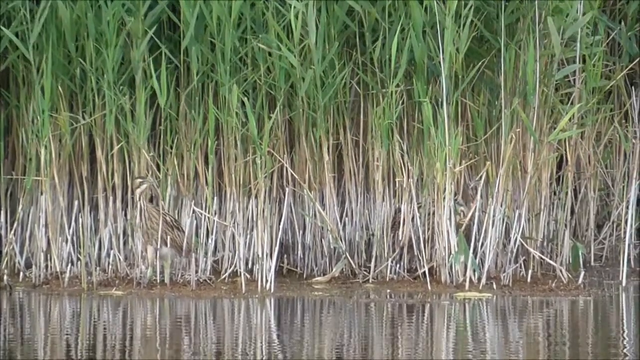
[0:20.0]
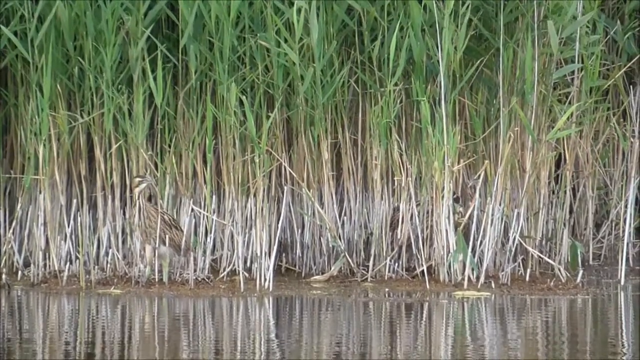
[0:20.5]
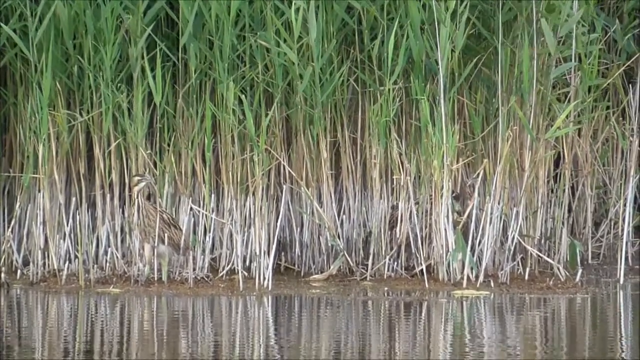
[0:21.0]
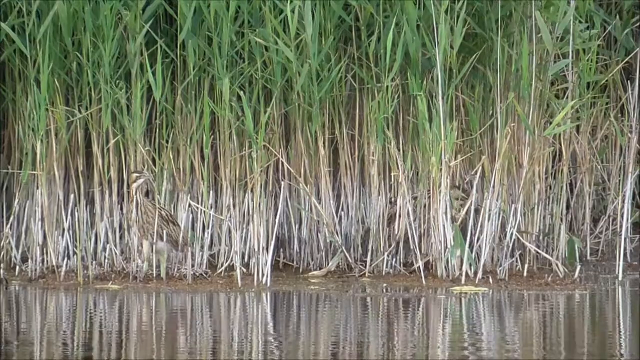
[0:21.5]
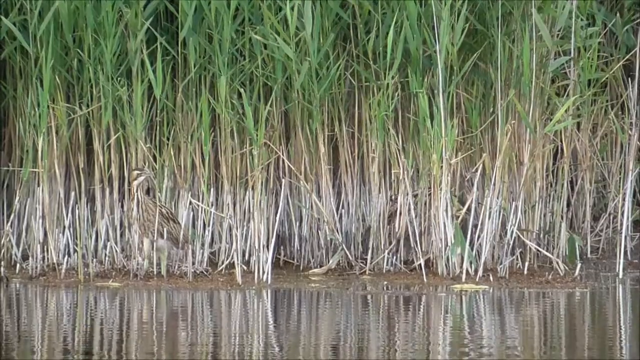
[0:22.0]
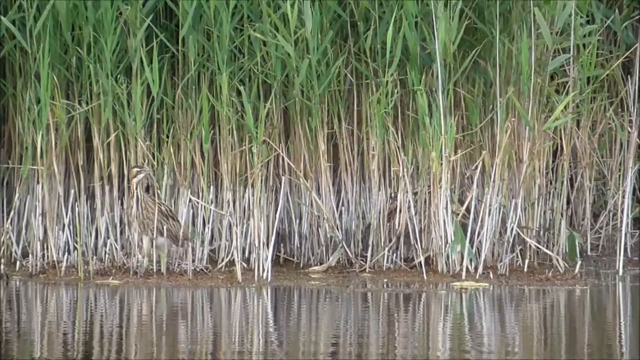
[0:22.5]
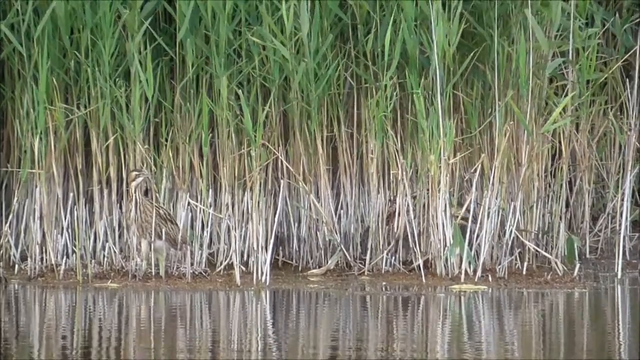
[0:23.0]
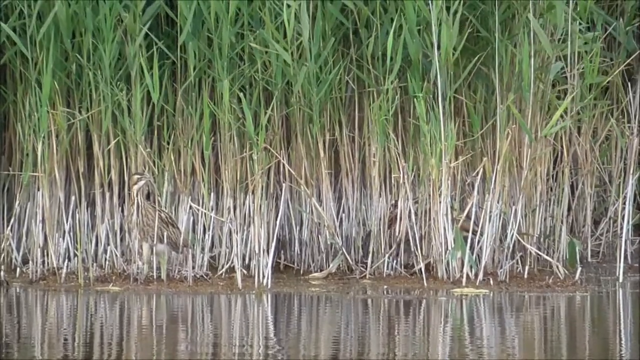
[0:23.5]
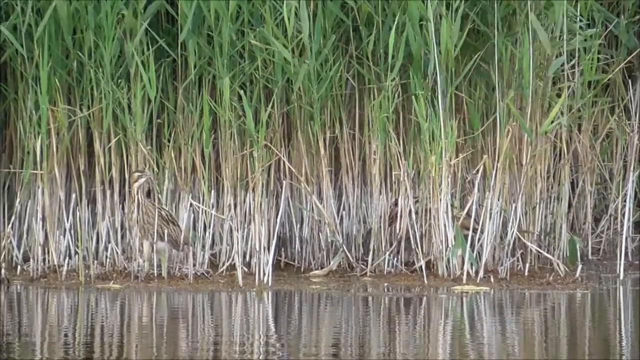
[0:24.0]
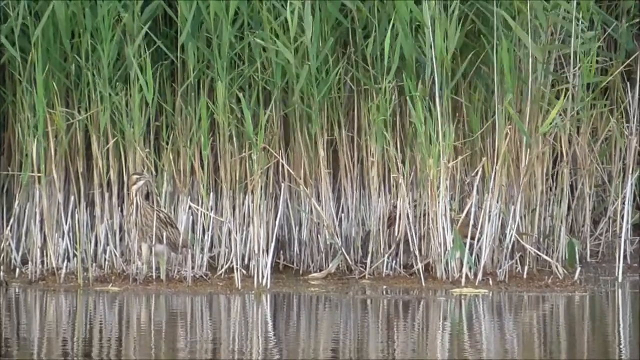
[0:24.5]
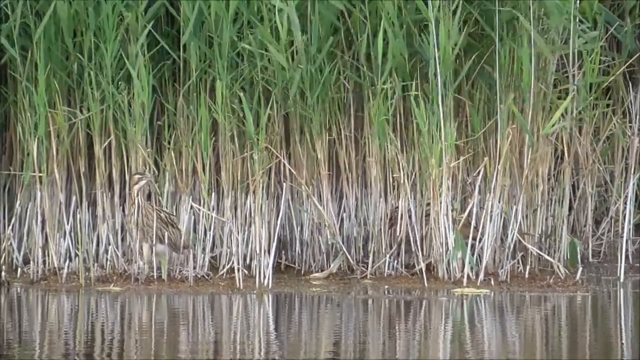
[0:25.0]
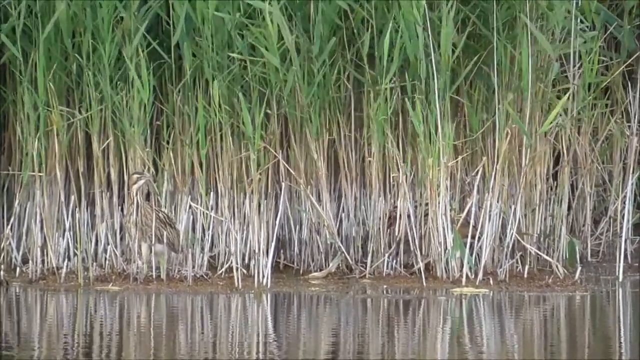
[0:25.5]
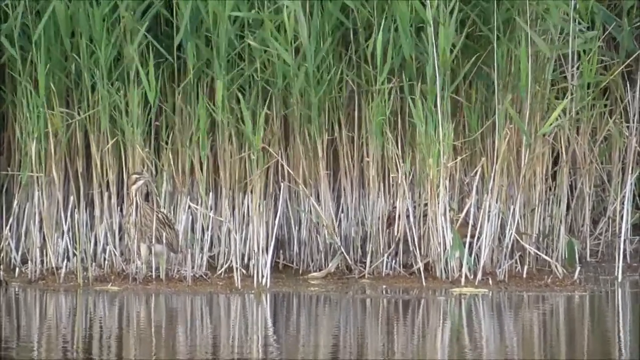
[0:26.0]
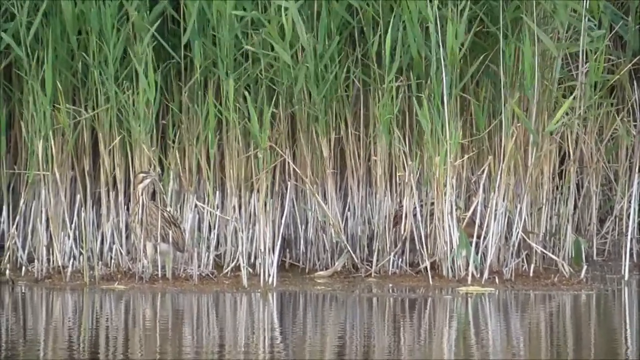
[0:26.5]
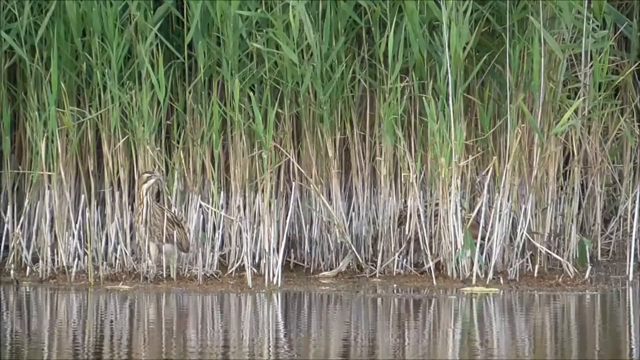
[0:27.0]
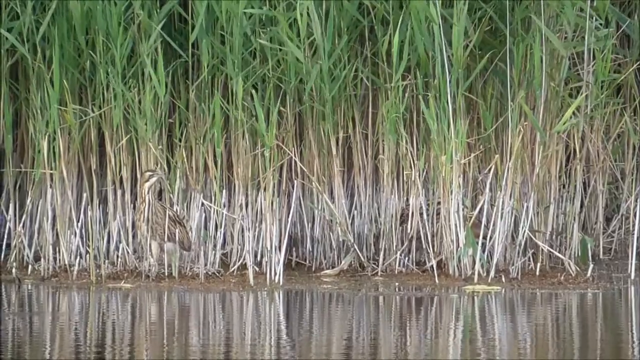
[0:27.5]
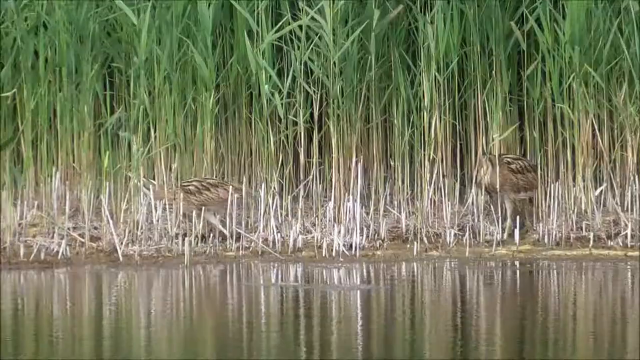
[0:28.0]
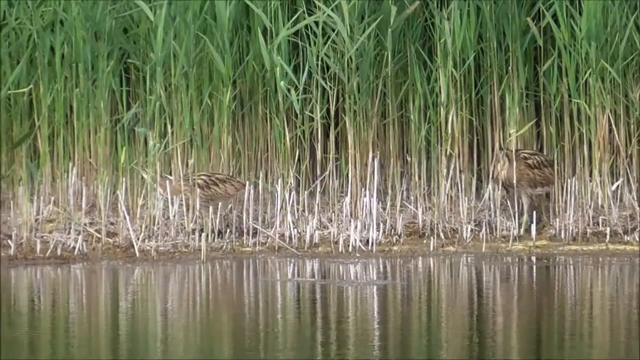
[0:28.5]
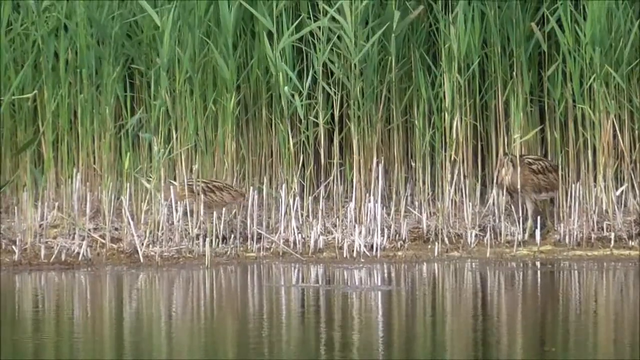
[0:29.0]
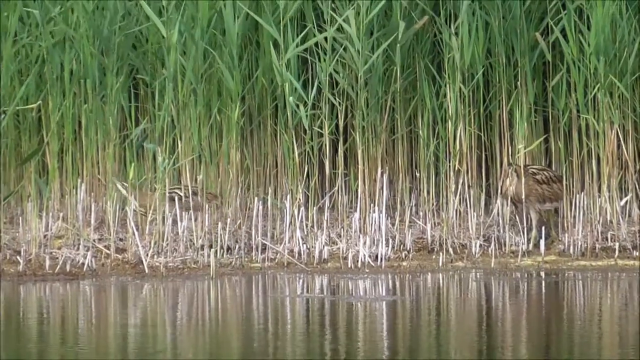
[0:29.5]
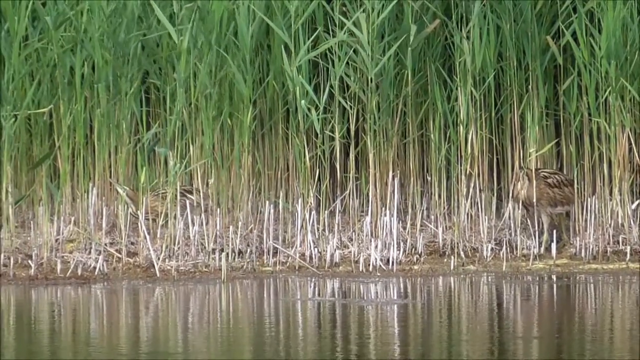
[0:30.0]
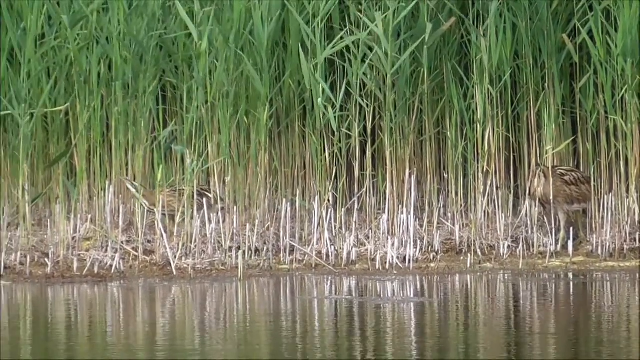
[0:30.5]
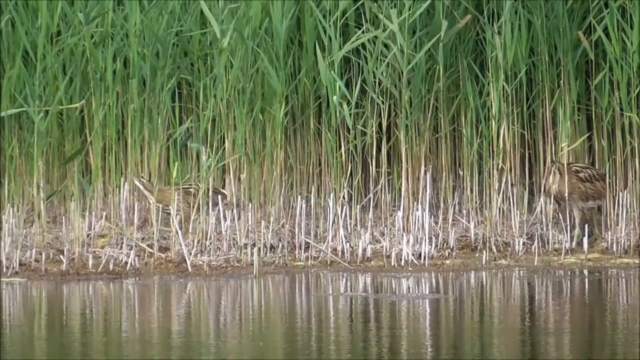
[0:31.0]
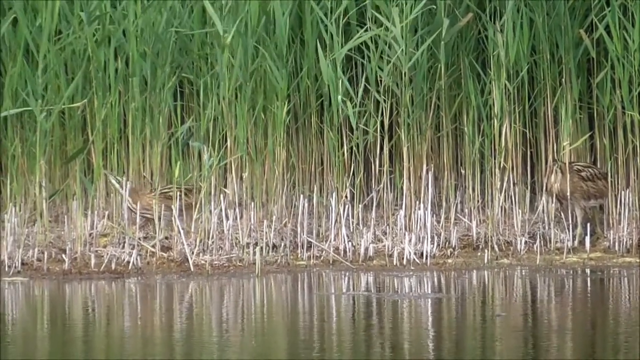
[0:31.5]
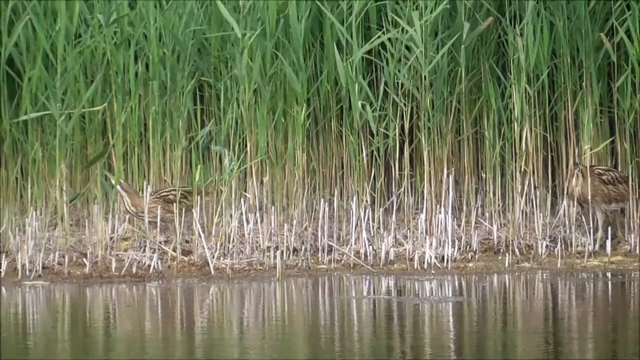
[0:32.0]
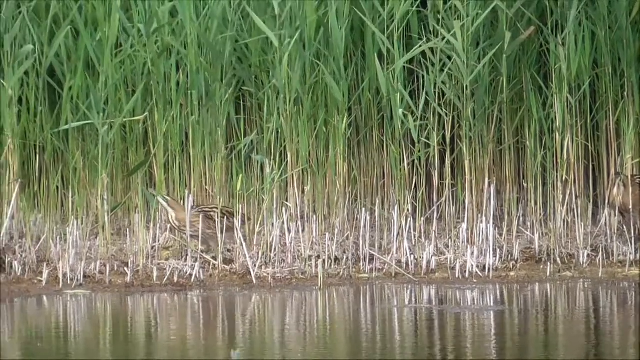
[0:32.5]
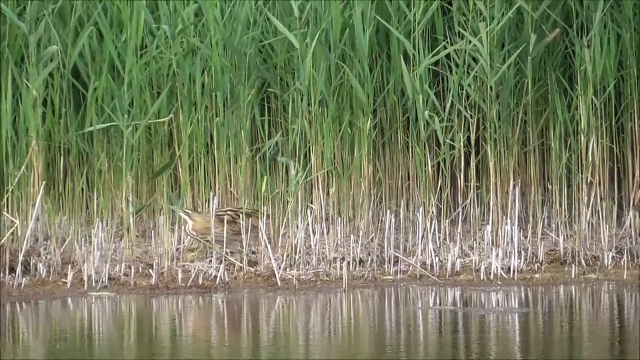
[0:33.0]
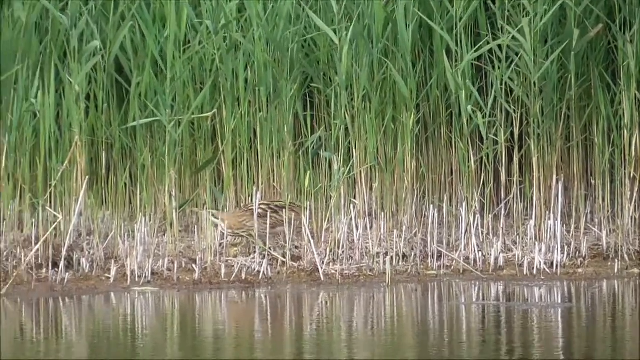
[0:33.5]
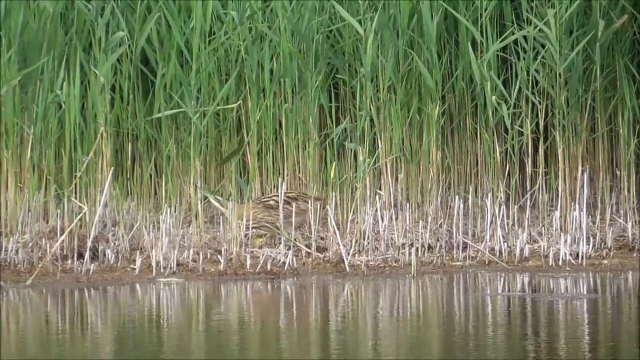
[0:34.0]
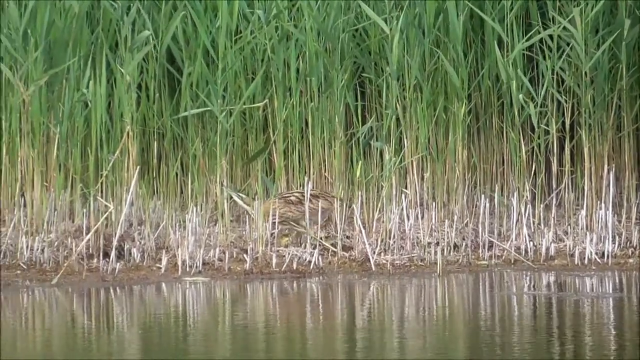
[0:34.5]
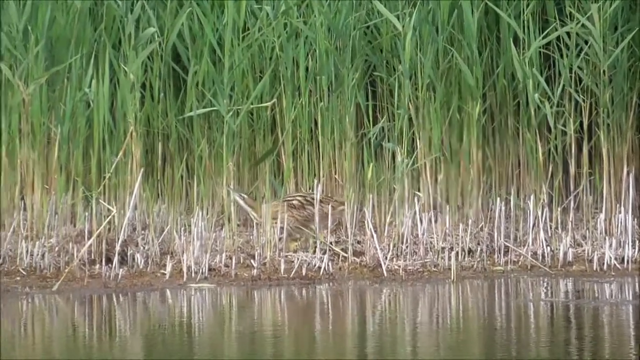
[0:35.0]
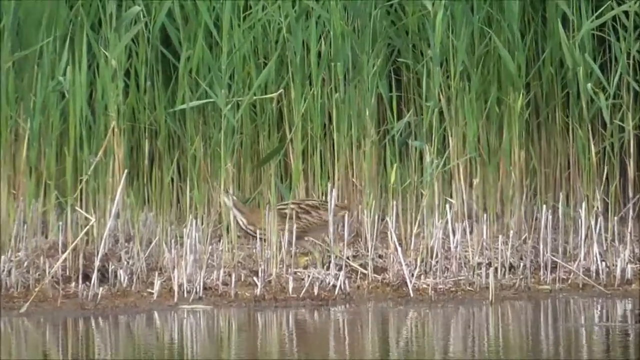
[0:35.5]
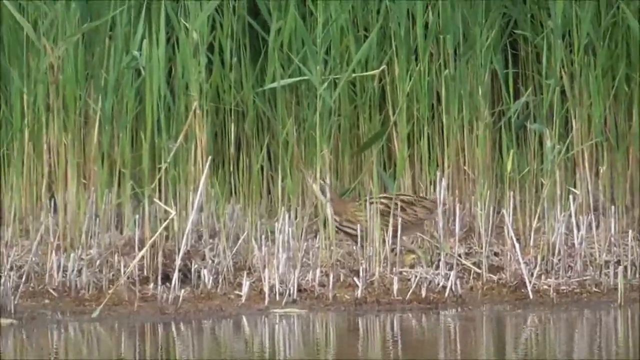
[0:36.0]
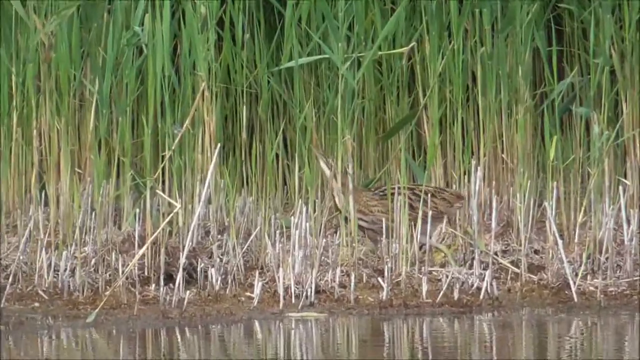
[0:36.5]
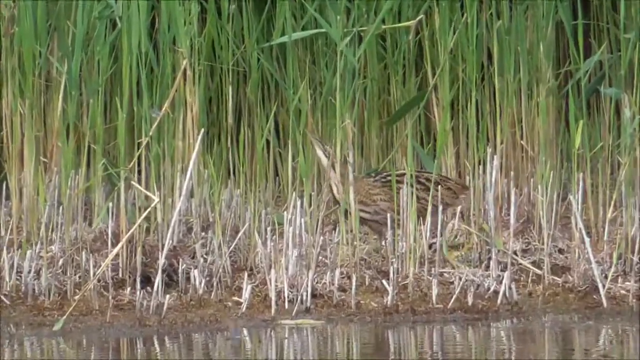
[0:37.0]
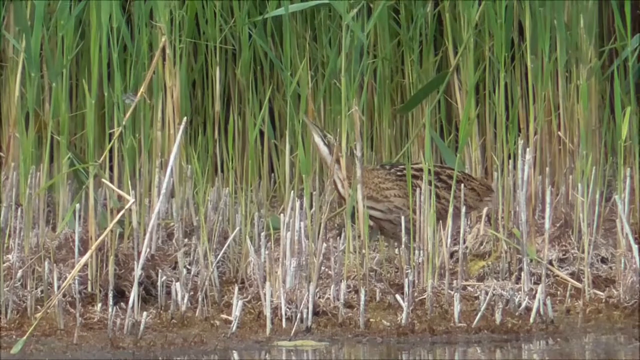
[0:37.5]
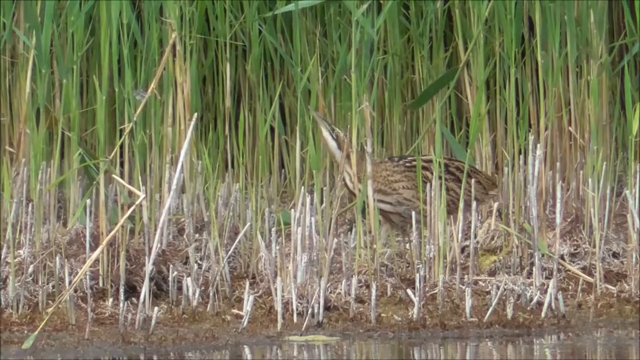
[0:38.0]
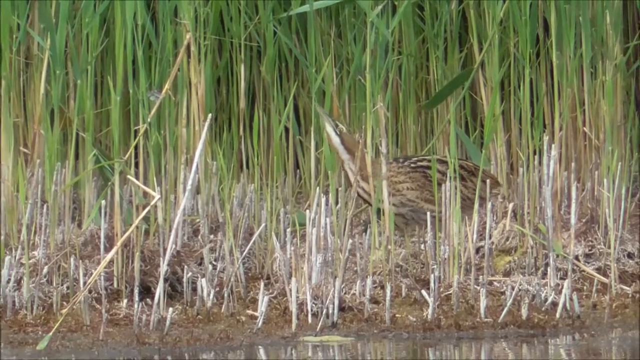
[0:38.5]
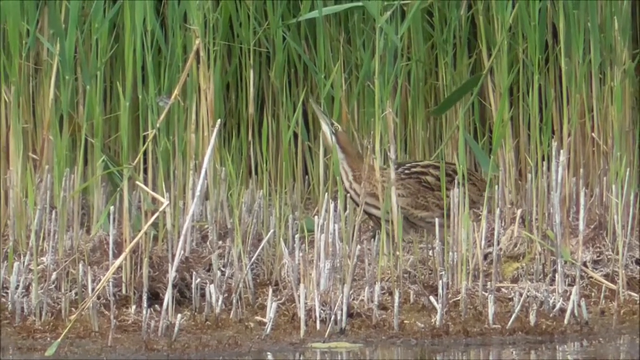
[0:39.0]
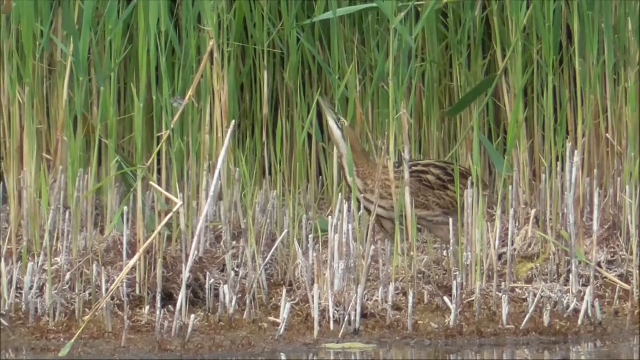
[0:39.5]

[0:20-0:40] The camera points at the water area with a bunch of plants growing out of the dirt right next to the water. Two birds are at the waterfront, and a light wind makes the tops of the plants move in little gusts. Then what looks like another view of the same area appears: still plants next to water, but slightly different, with colors that appear a little more saturated and brighter. Two birds of the same type are near the water. The one on the left walks toward the left side of the frame, and the camera kind of follows it. The camera then zooms in on this bird, likely using the camera's zoom rather than moving toward it. The bird's head is pointed upward as if it is looking at a bug it wants to eat.